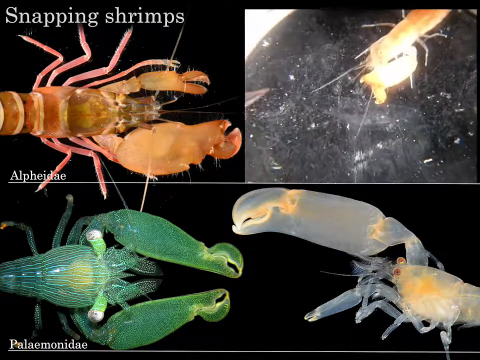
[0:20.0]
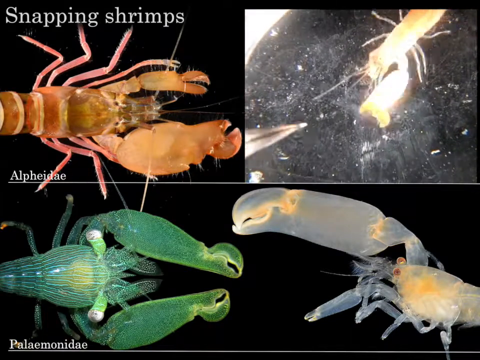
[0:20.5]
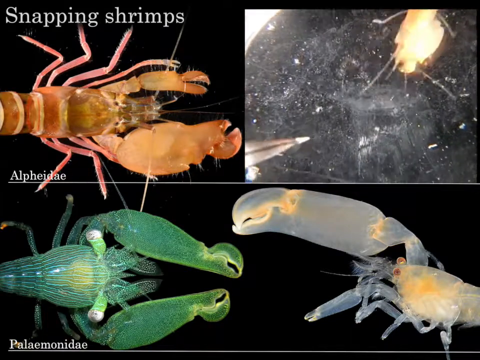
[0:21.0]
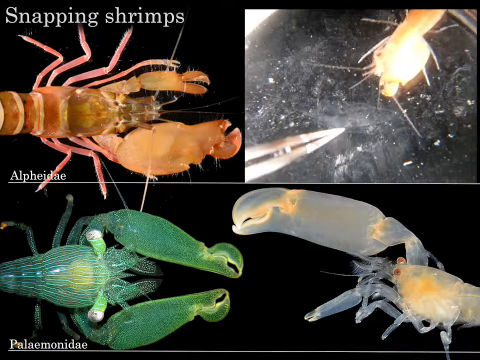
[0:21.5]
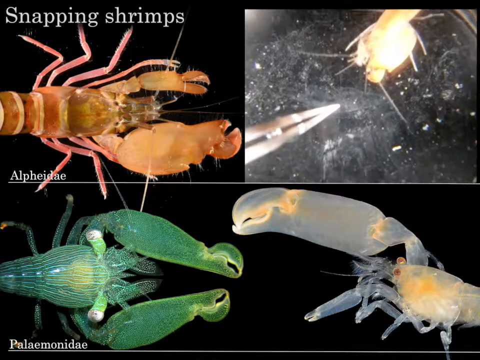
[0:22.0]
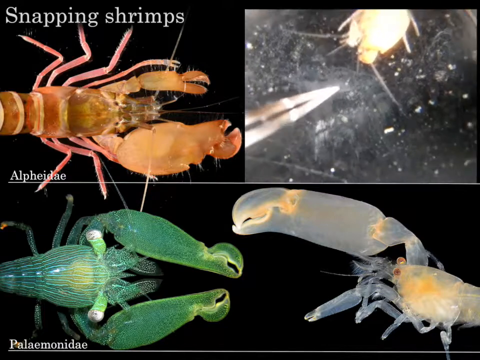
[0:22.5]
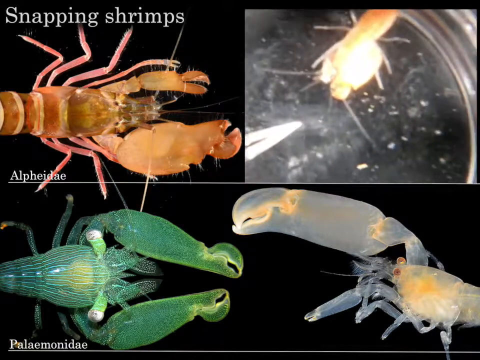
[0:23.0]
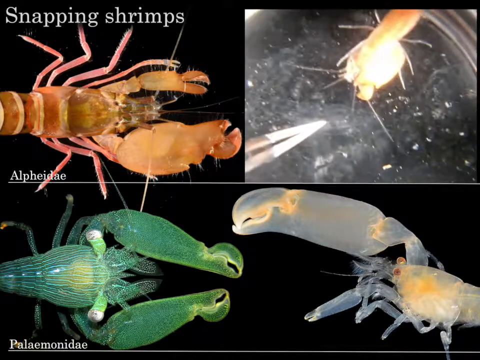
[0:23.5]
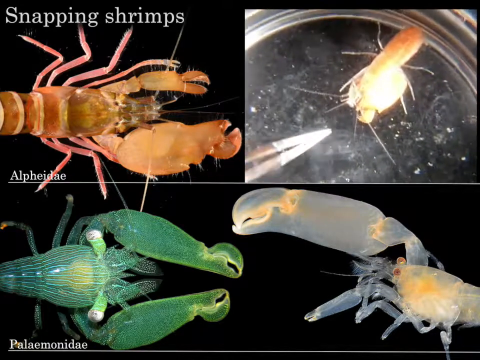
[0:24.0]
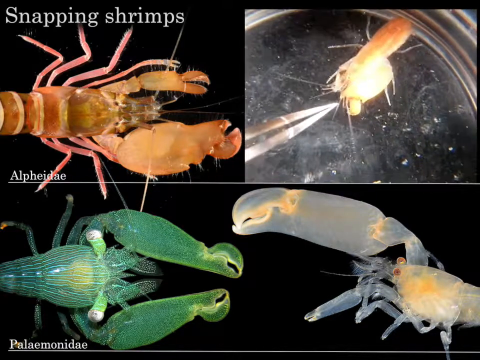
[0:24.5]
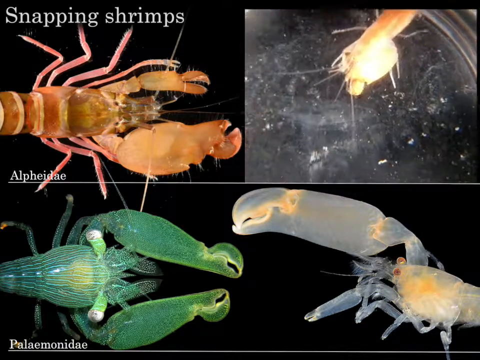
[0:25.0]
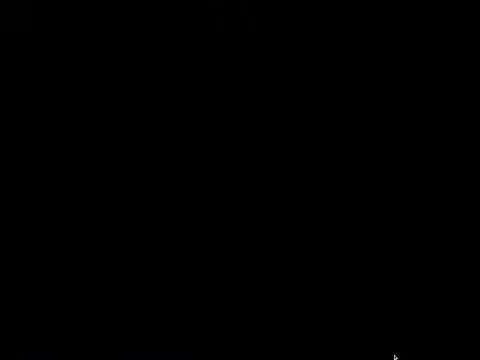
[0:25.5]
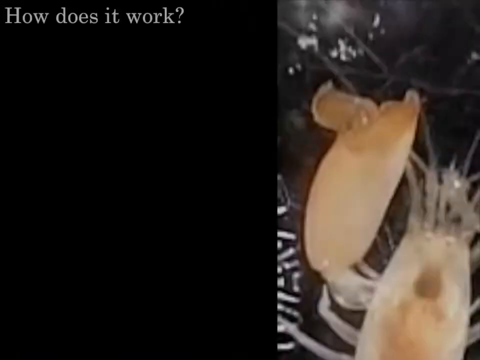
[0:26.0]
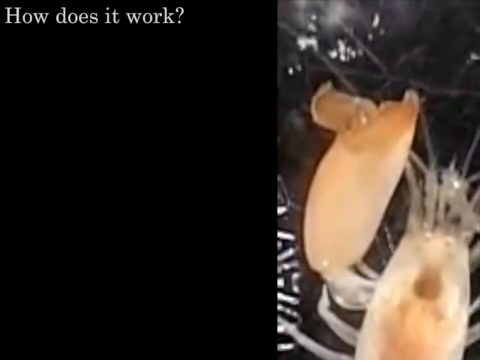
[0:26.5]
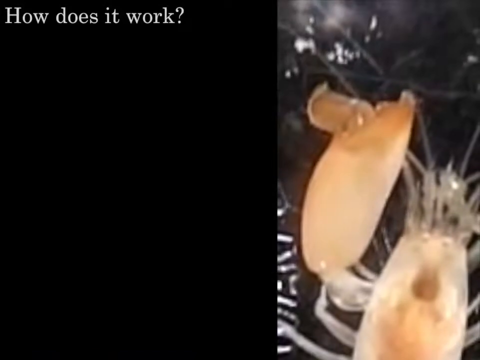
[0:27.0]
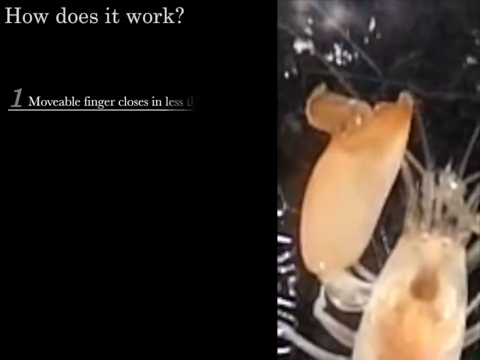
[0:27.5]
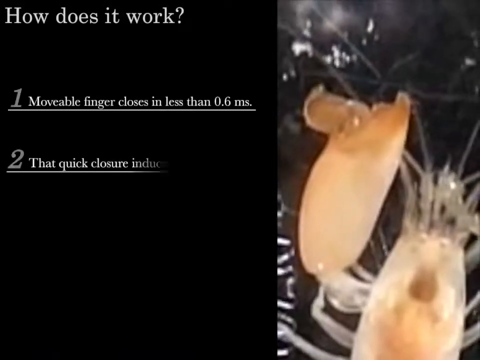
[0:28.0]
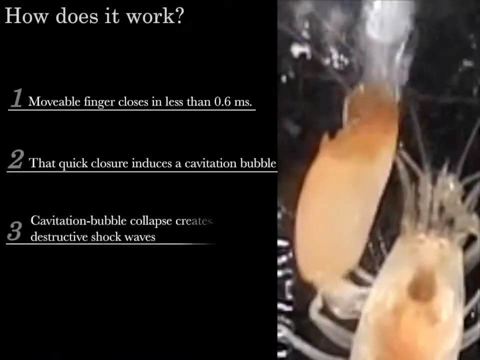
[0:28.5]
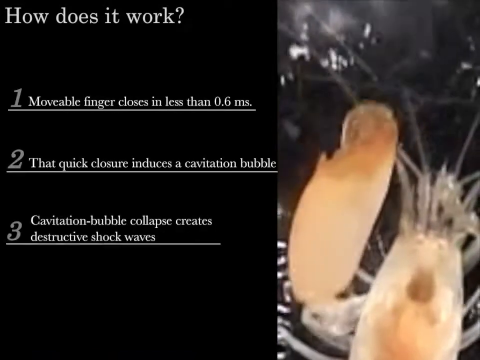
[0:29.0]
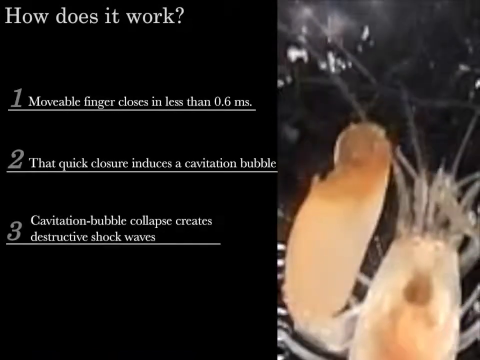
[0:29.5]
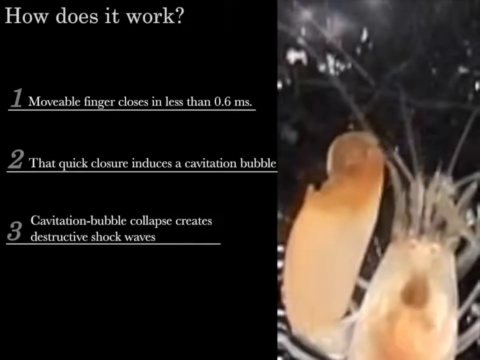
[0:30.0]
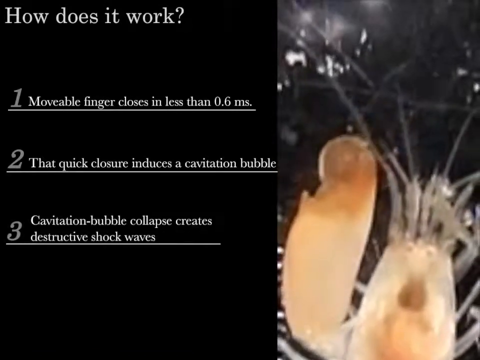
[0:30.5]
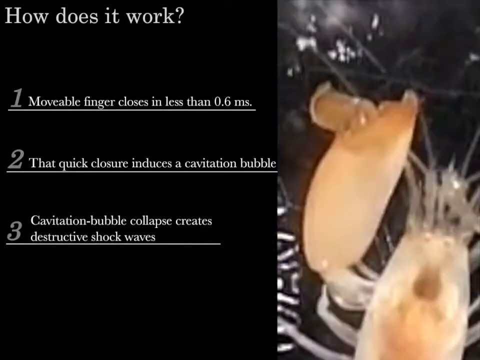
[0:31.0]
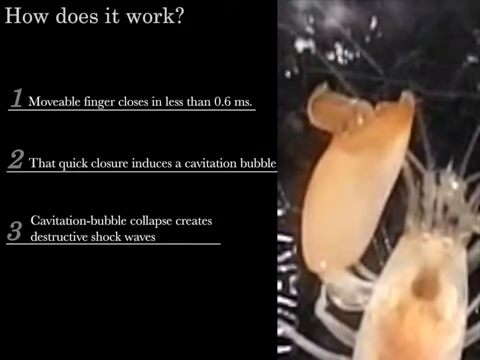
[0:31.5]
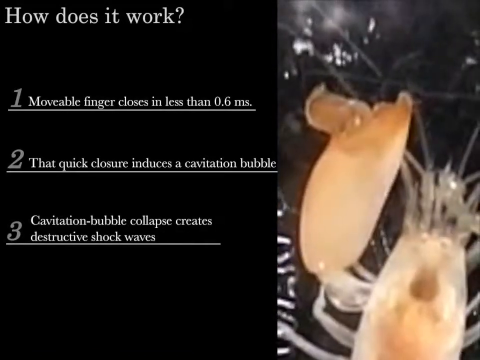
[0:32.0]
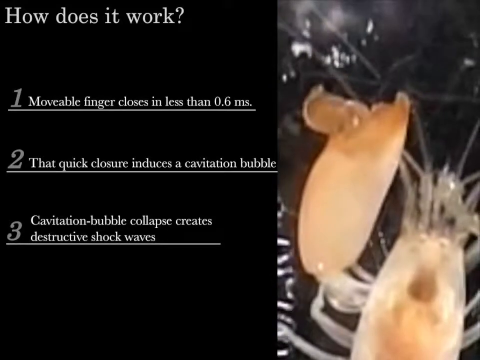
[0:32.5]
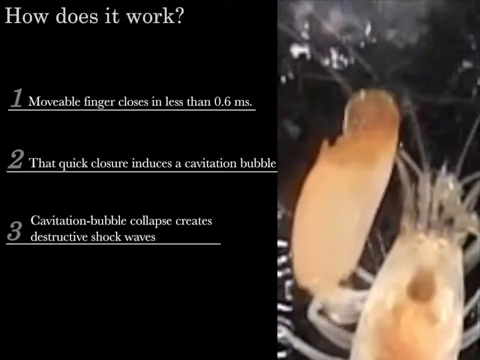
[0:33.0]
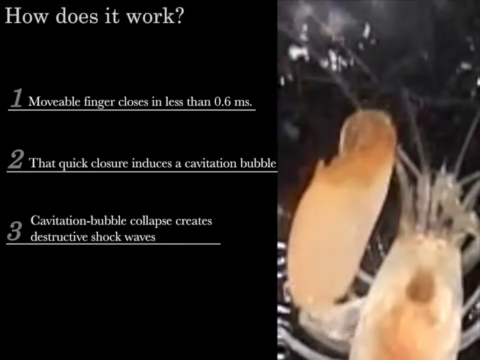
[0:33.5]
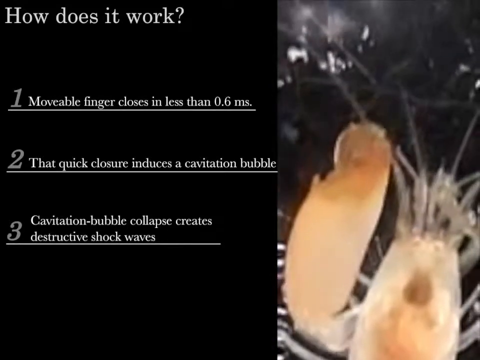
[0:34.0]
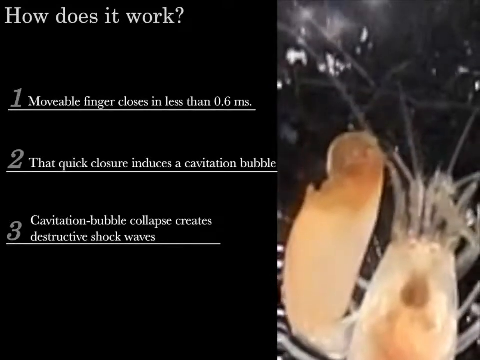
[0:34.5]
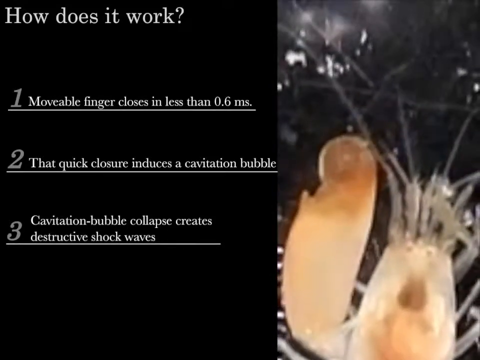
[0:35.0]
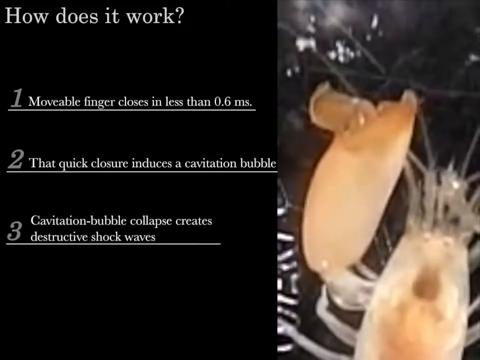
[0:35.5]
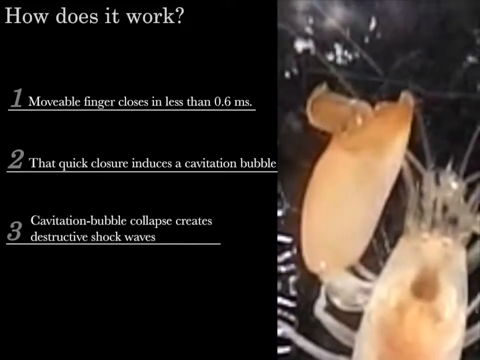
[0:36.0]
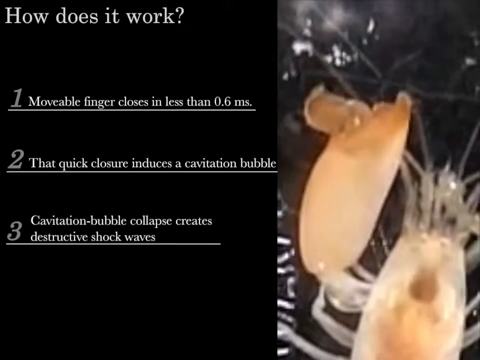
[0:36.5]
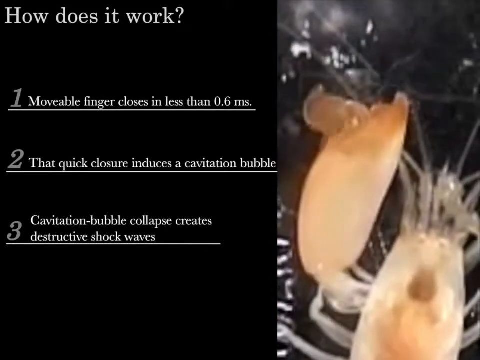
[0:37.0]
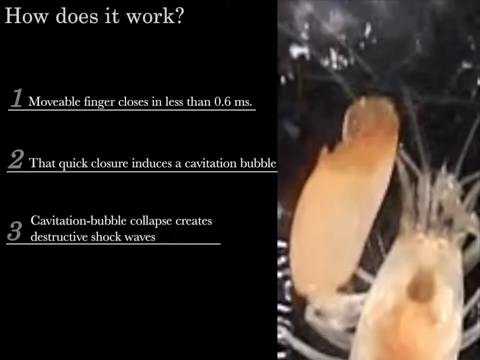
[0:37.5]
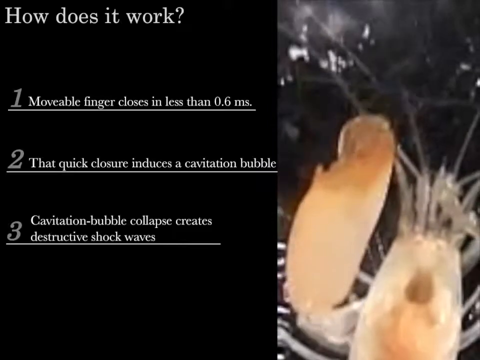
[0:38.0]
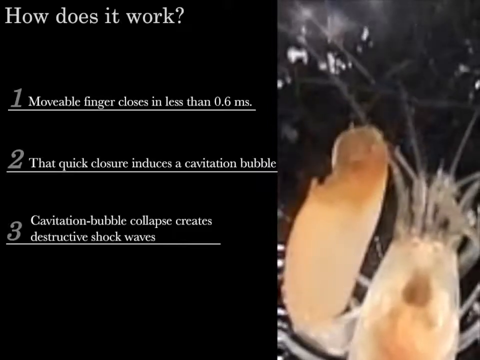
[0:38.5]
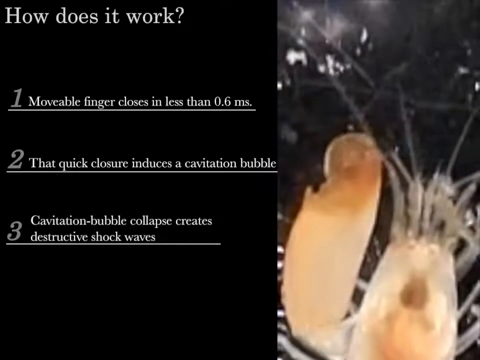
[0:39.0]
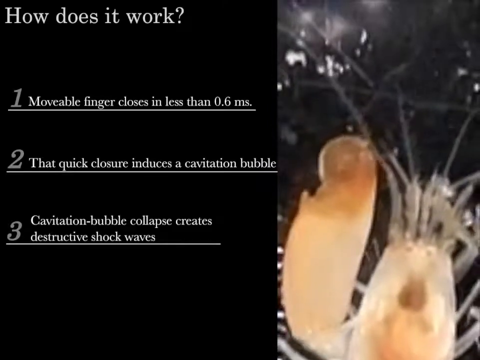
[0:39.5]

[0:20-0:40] The same four split screens appear with the same images in each. Underneath the one on the left side, small white print reads "Alphidae". The top left shows the live one: the crayfish is backed all the way up into the top right corner. Its bottom claw, about half as long as its body, reaches down to the left, stretched wide open, as it charges forward and backs up a little while the tweezers come in from the bottom left corner, and then it sits there for a moment. The tweezers move closer and it moves its claw a little. The view then changes to a split screen: on the left side is a black background with white text at the top reading "how does it work?" On the right side is the same crayfish, its head toward the bottom and its big claw up to the left, extended out and open. Below "how does it work?" on the left, three examples numbered one, two and three come up explaining how it works. The crayfish snaps its claw and extends it back out. As something comes in from the top down toward it, it snaps its claw again and slowly retracts it back toward its head. It is shown open again, and as something comes down from the top corner, it snaps at it again.